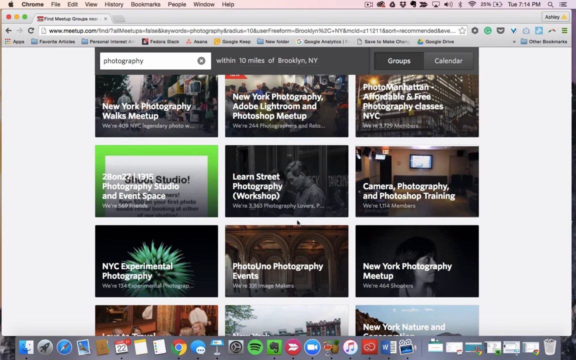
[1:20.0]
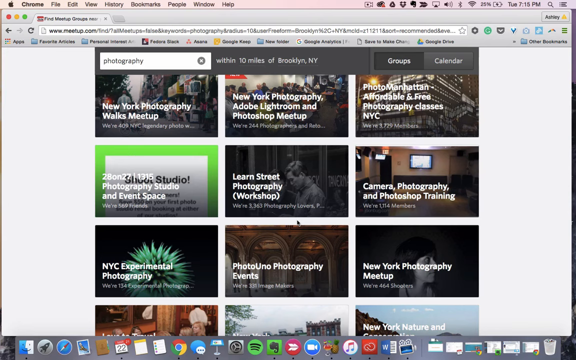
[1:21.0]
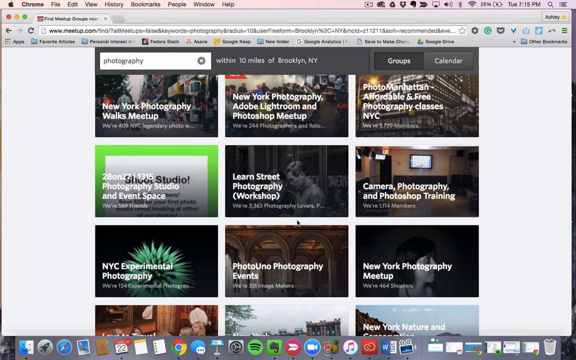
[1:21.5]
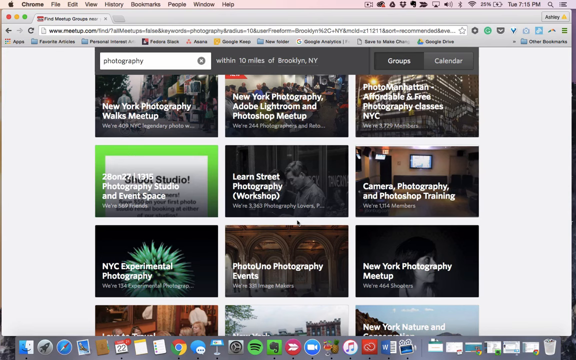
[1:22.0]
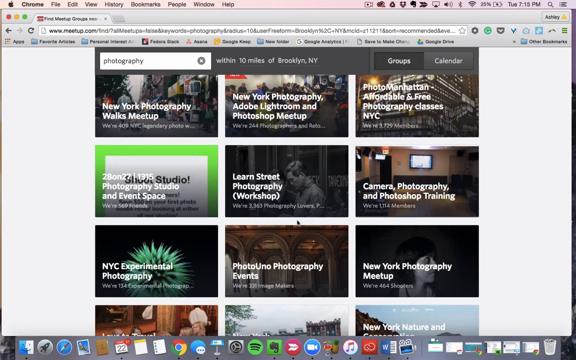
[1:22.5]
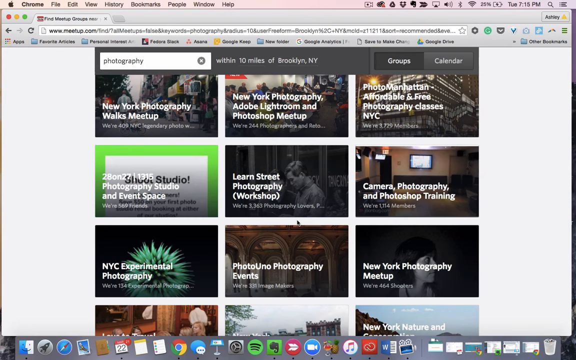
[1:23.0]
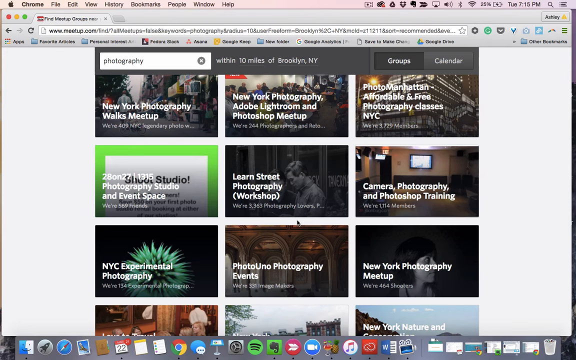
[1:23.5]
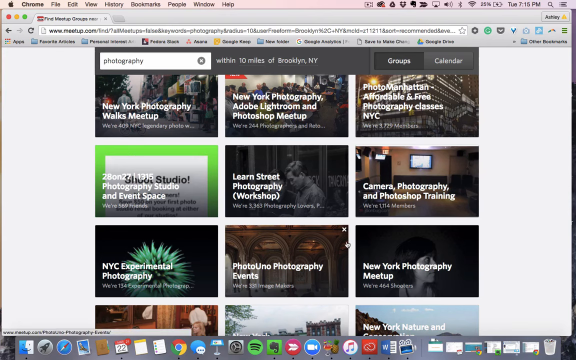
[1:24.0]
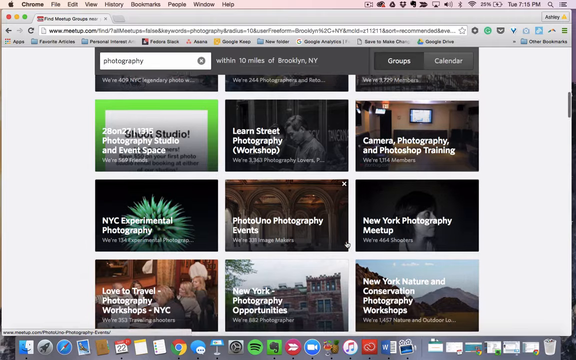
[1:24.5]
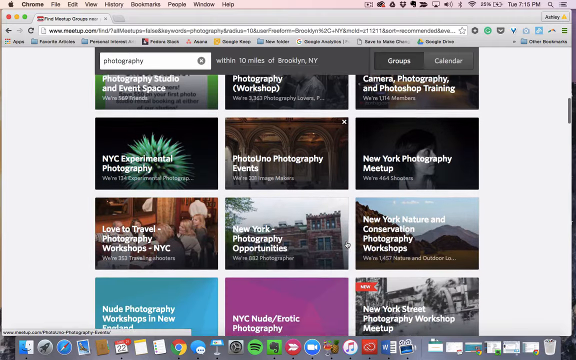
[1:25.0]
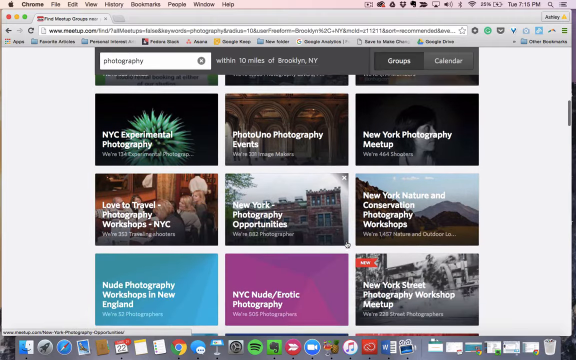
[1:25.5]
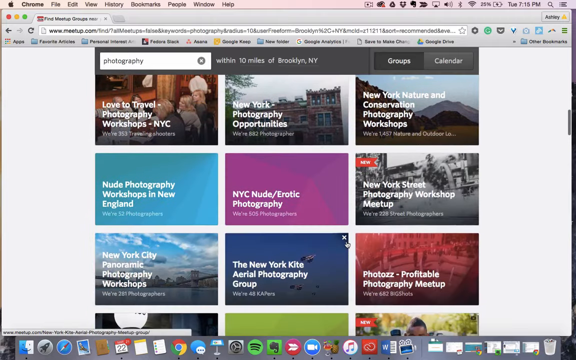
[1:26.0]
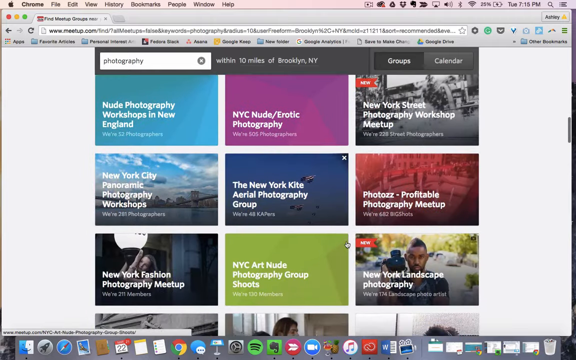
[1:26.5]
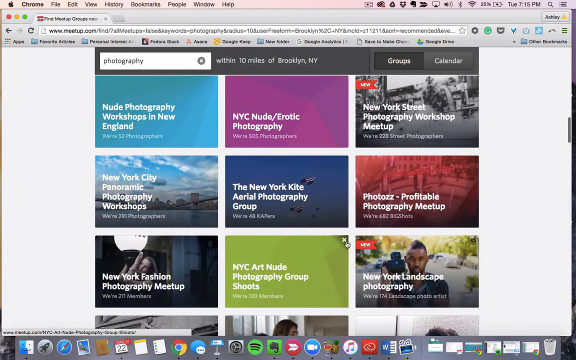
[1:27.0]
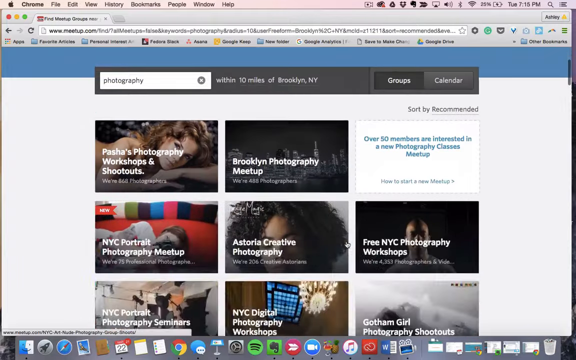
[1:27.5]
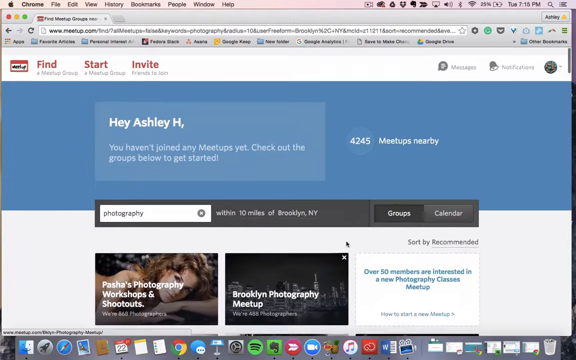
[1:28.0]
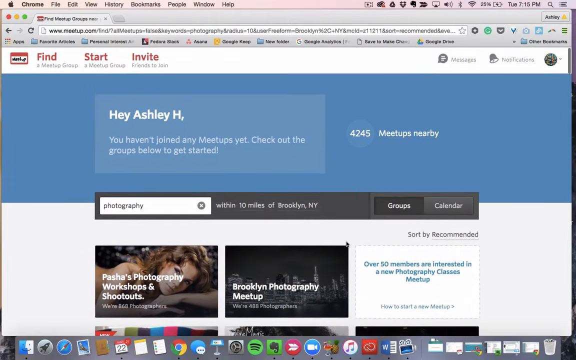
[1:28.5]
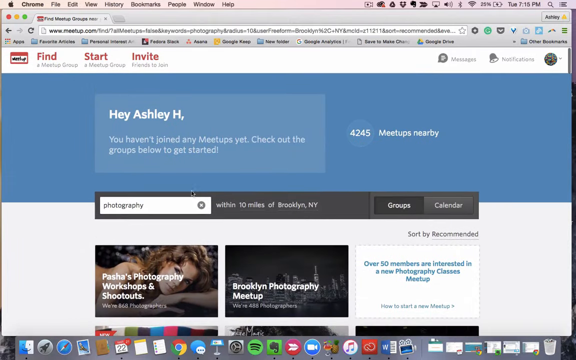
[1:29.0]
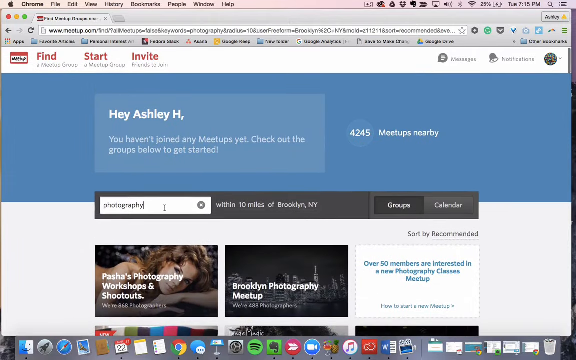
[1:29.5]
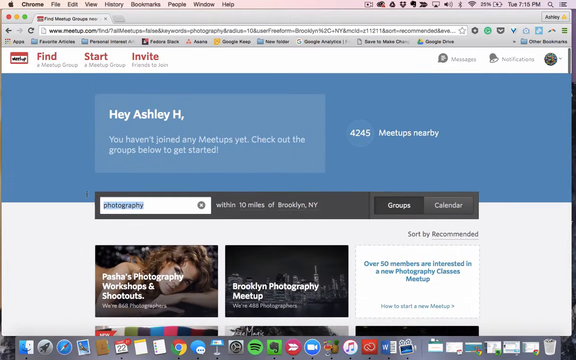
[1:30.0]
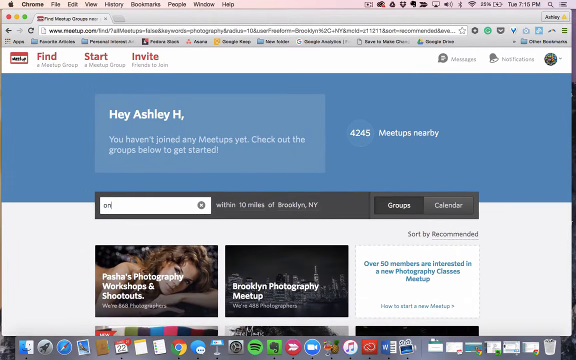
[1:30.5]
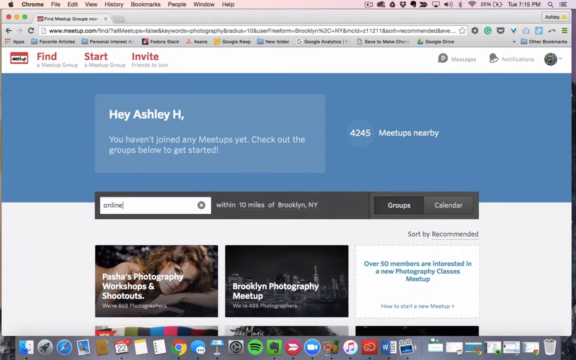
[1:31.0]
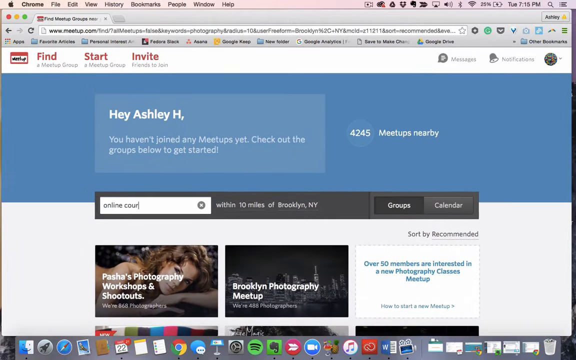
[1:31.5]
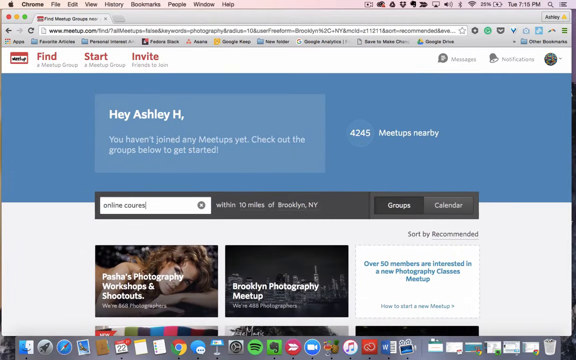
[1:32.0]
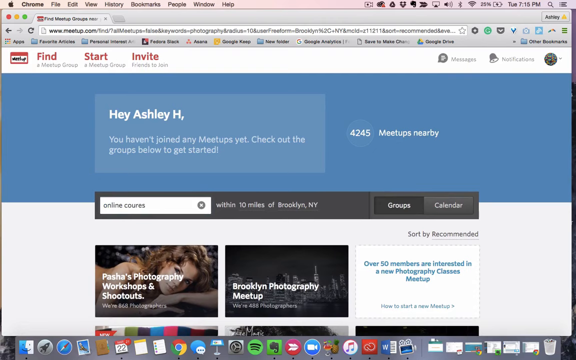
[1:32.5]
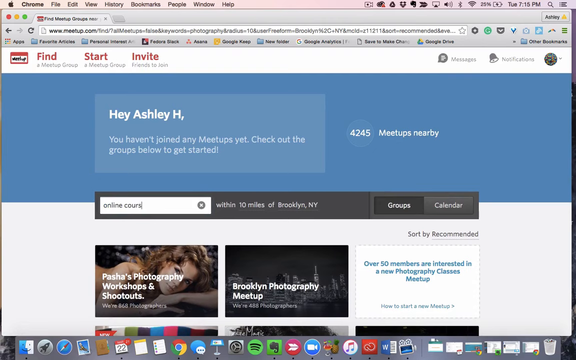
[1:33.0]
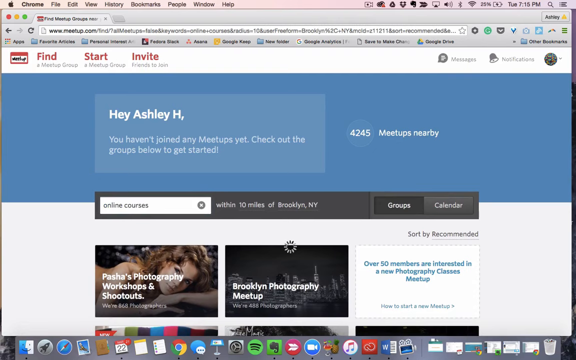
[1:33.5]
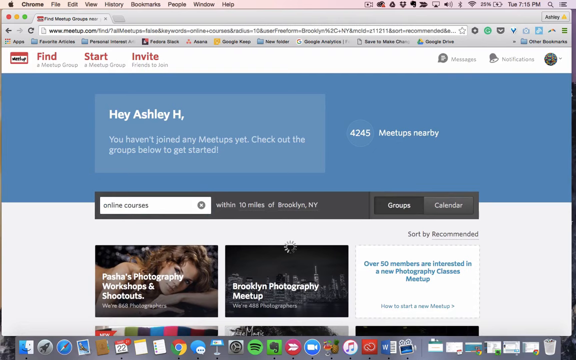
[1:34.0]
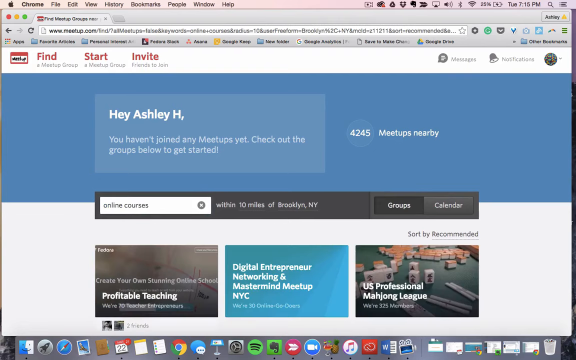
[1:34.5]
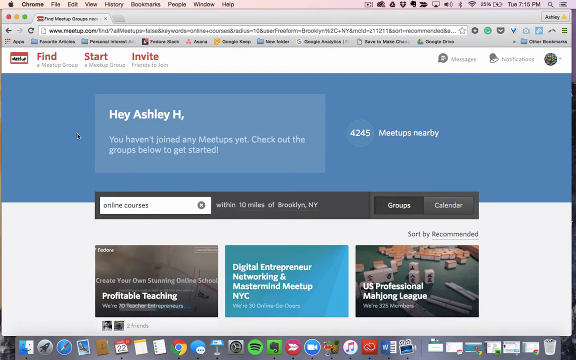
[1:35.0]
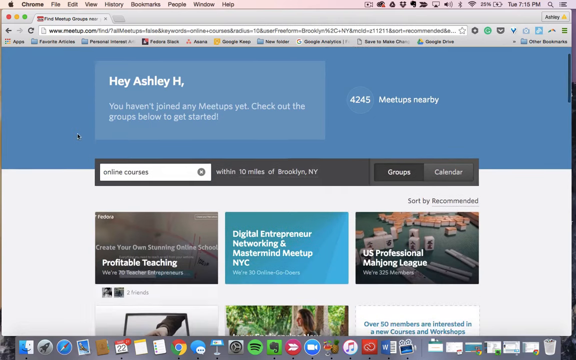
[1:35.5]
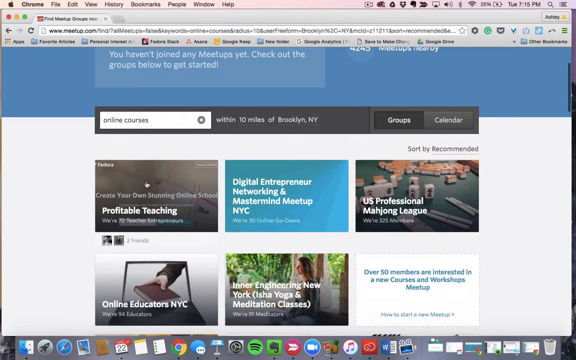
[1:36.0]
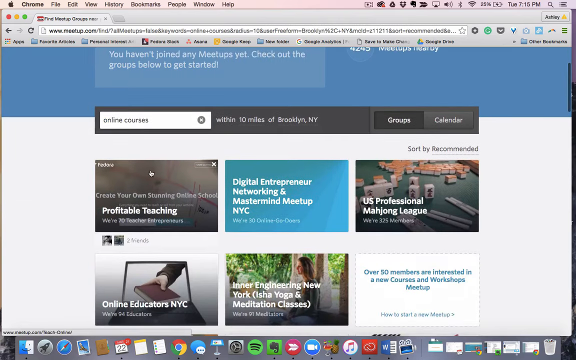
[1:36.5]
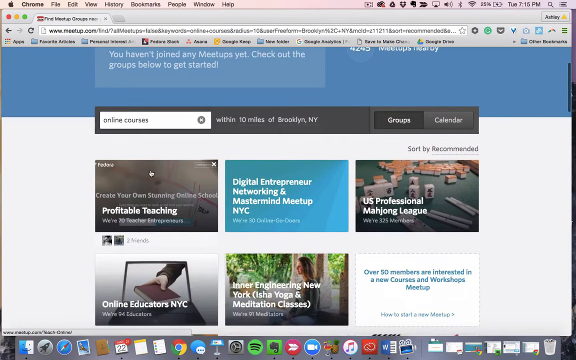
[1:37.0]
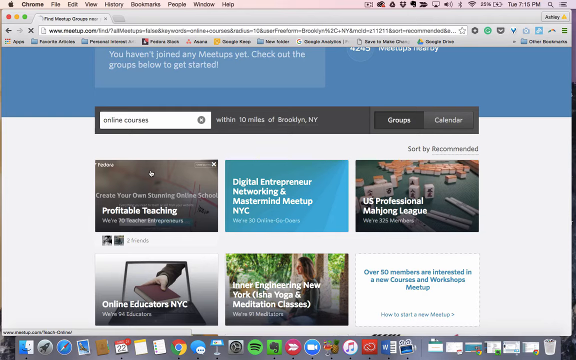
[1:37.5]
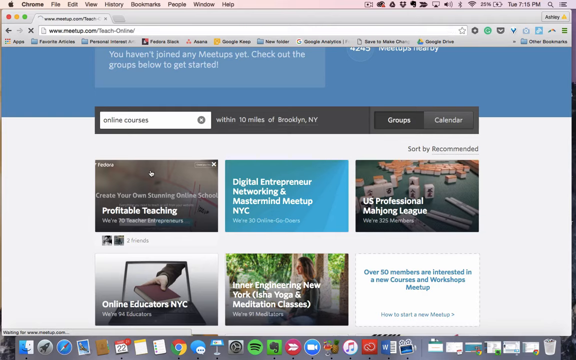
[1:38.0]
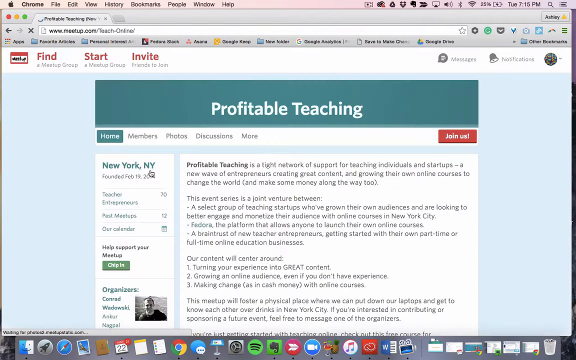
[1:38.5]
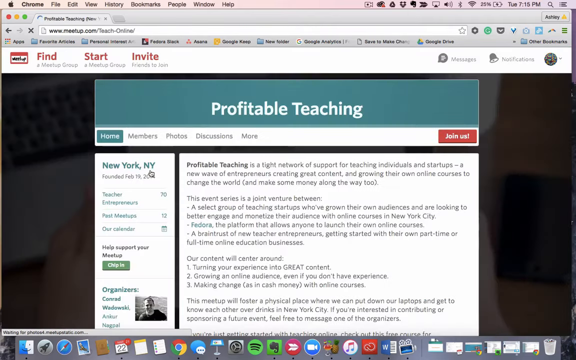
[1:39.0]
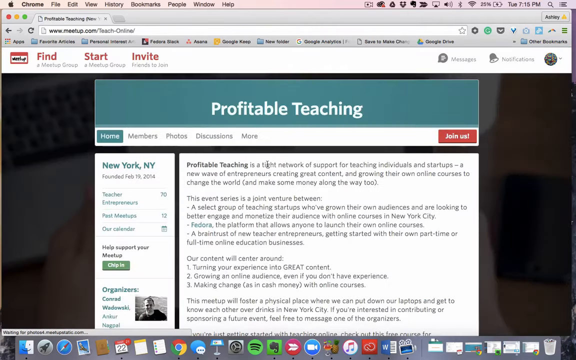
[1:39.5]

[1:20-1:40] More photography results appear: Photography Studio and Event Space, which is green, Lynn Street Photography Workshop with what seems to be a male behind it, Camera Photography and Photoshop Training, NYC Experimental Photography, and New York Photography Meetup. The user scrolls up and back down, then types "online courses" into the search. Among the results, at the beginning, is an online course about profitable teaching, with blue colouring around the outside, which the user clicks.